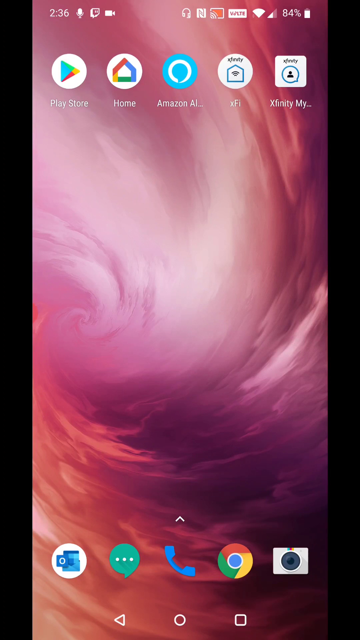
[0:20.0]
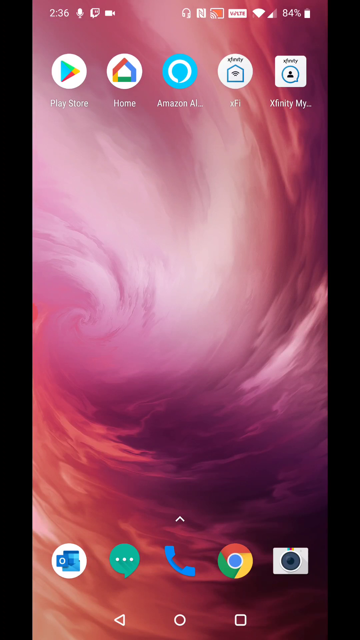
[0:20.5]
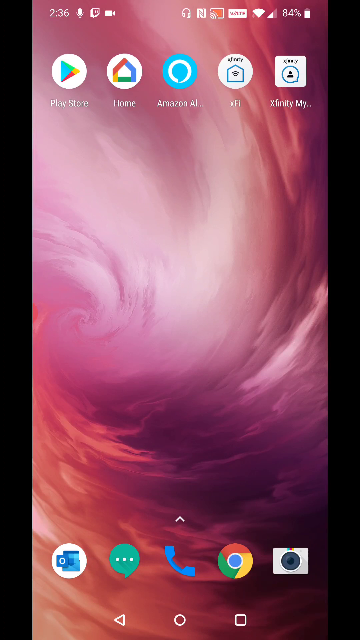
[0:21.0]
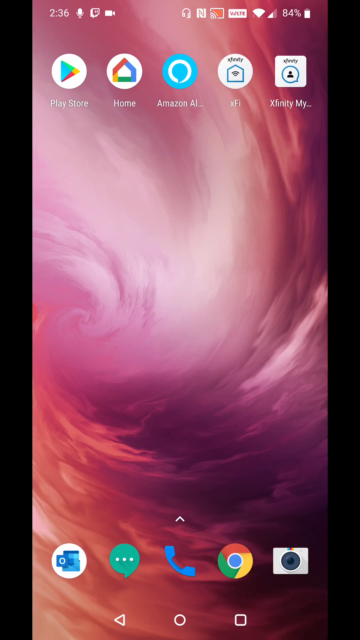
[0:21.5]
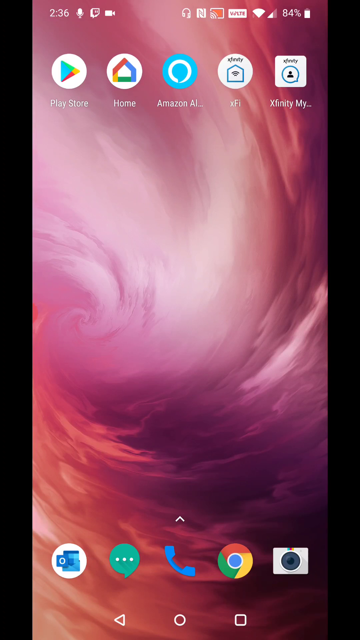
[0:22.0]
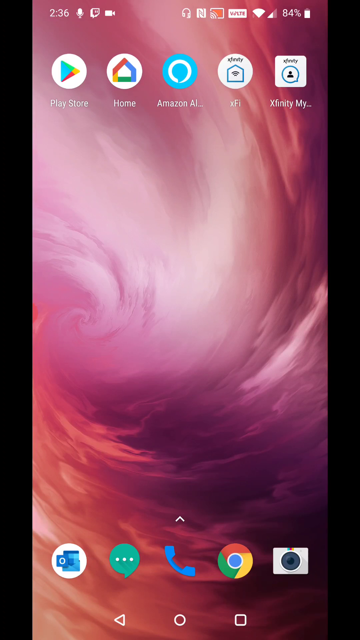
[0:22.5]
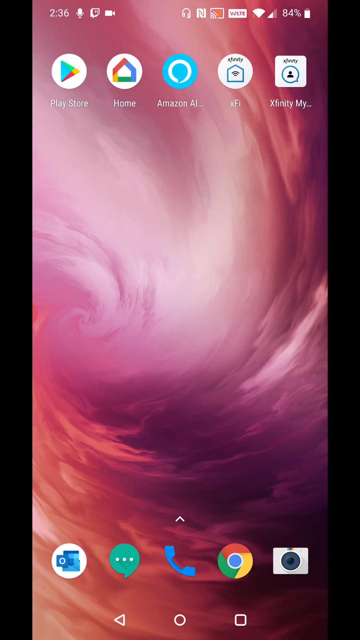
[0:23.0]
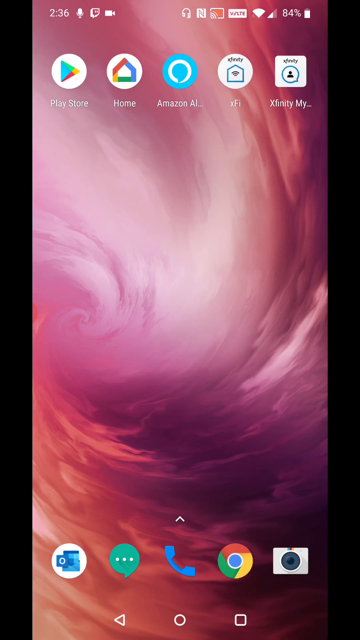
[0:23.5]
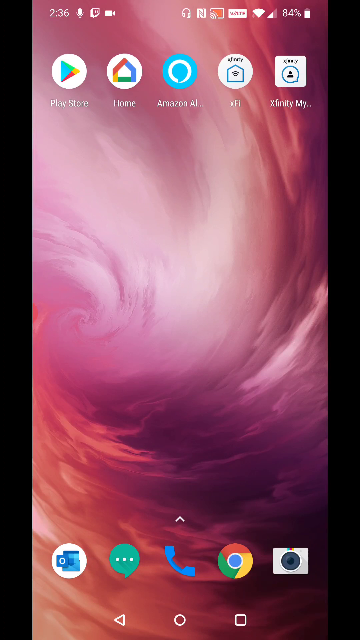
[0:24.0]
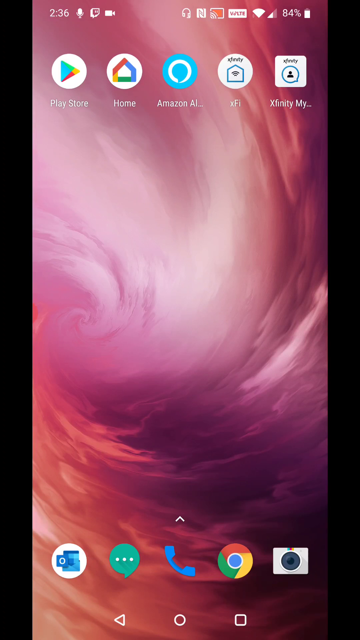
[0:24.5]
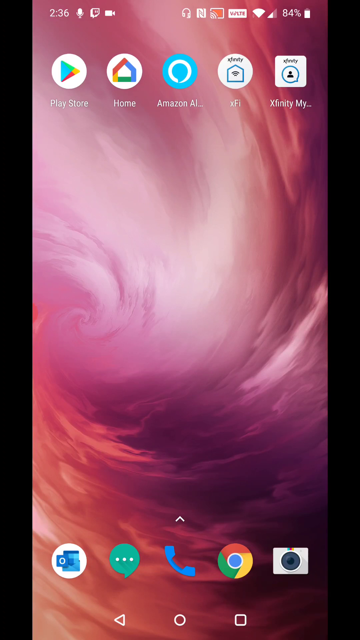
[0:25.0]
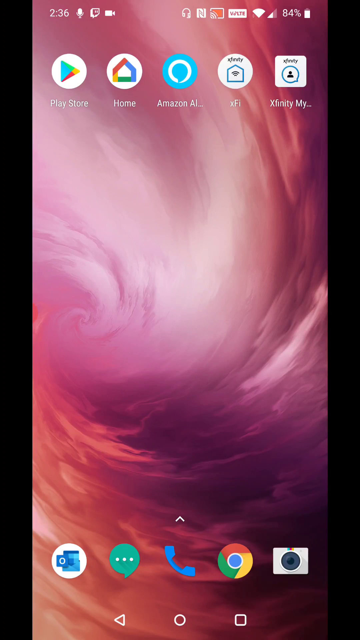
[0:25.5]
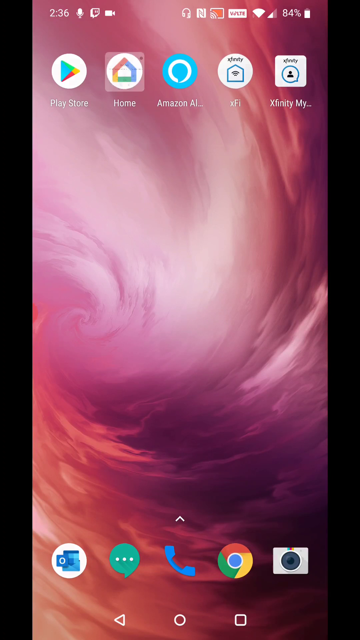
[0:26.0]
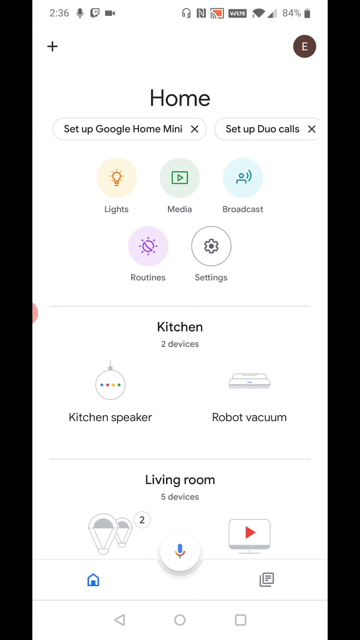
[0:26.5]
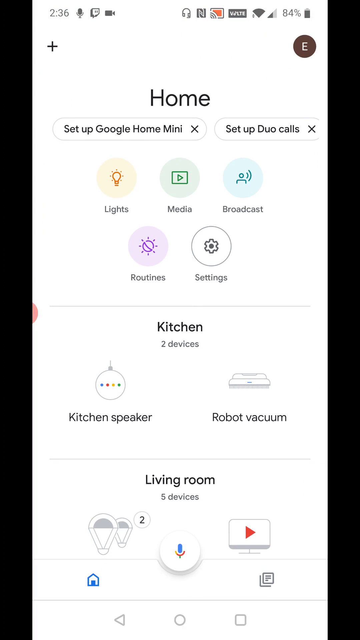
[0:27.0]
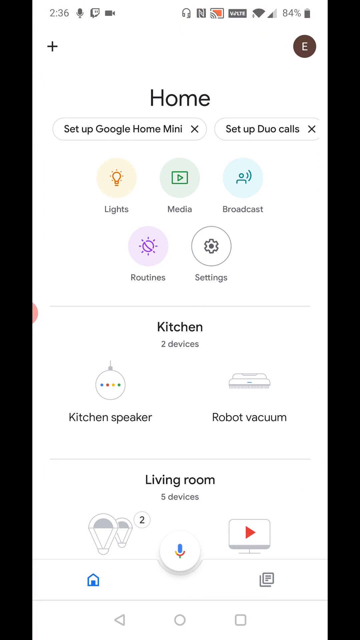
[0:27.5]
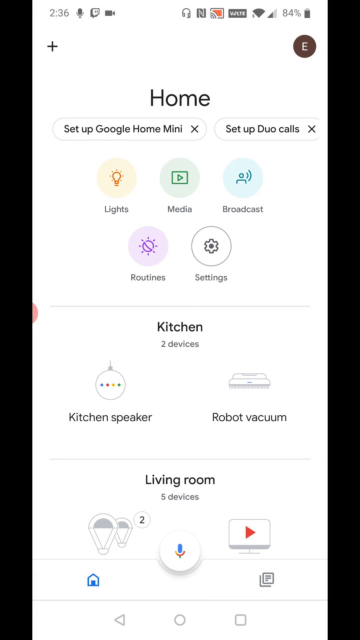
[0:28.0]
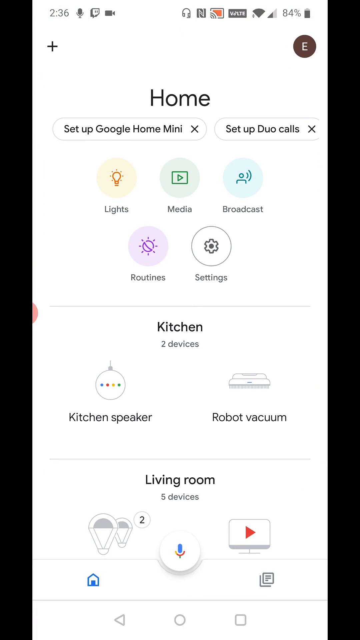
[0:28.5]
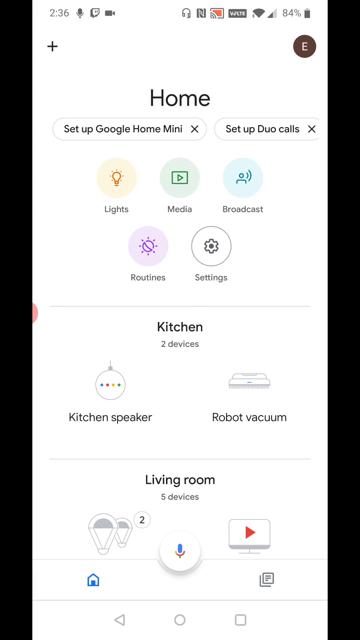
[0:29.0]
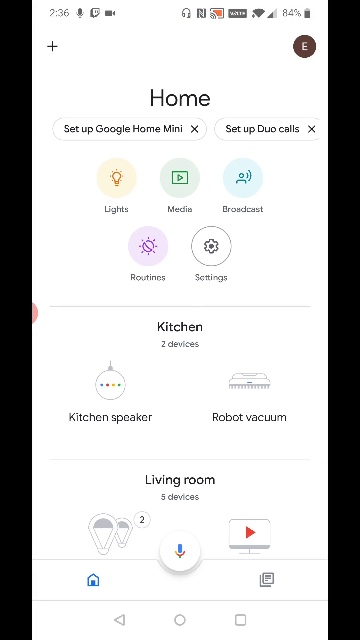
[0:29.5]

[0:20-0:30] The phone's home screen shows app labels reading "Play Store", "Home" and "Amazon", plus something about Xfinity, over a purple or pink cloud wallpaper. At first nothing really happens. Then the person pulls up a screen that says "Home", listing "Kitchen", "two devices", "Kitchen Speaker" and "Robot Vacuum", and a living room that has five devices, apparently the devices connected in their home. They then go back to the regular wallpaper on the background page.